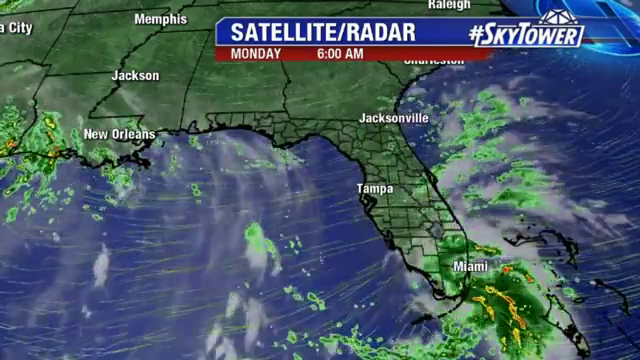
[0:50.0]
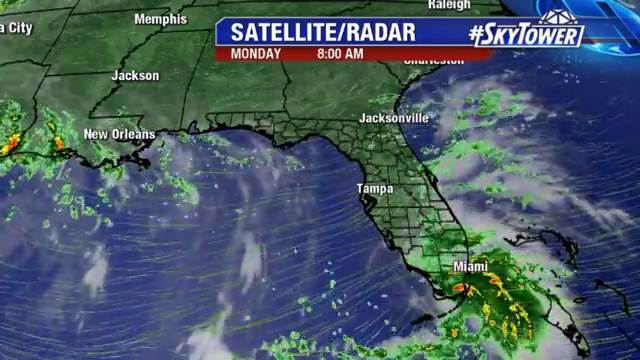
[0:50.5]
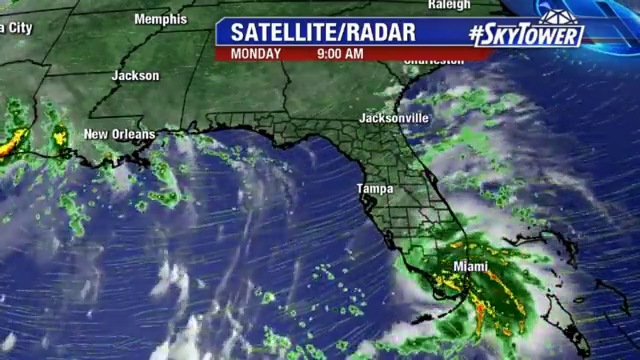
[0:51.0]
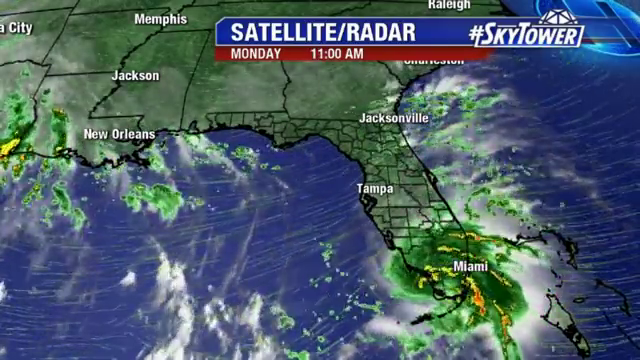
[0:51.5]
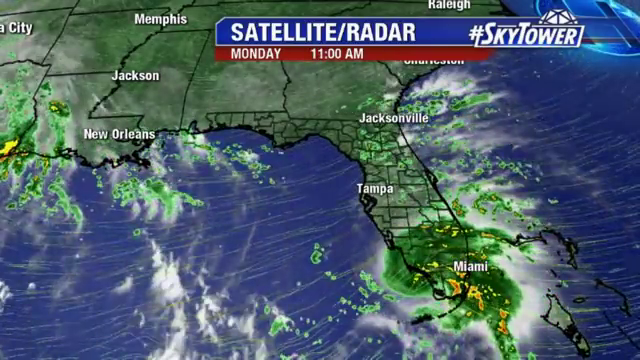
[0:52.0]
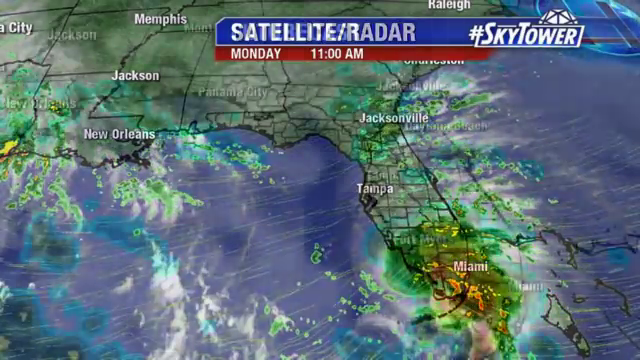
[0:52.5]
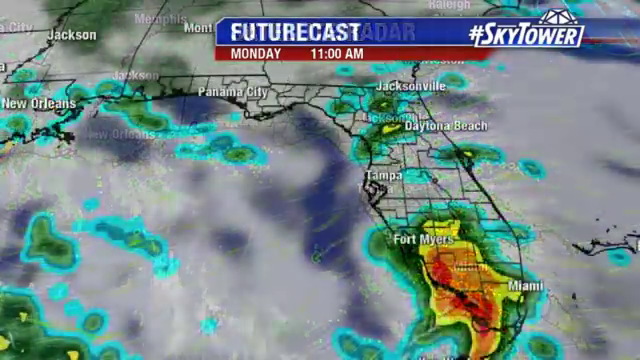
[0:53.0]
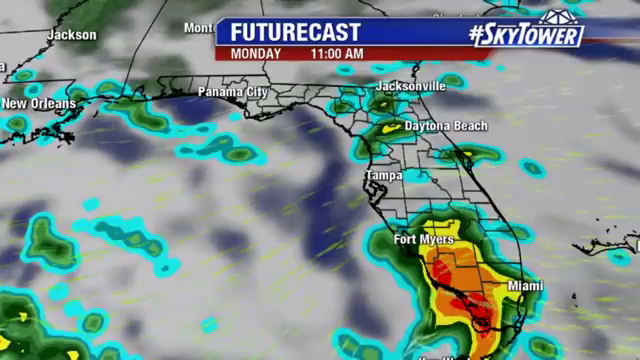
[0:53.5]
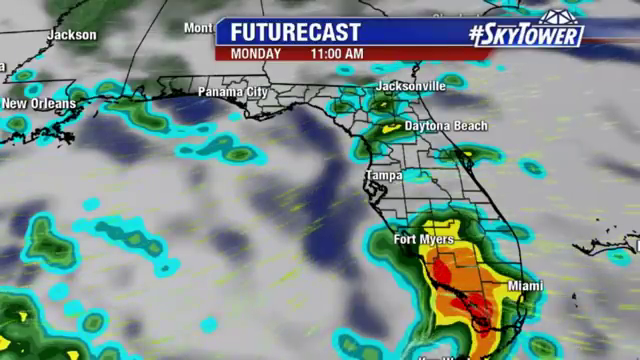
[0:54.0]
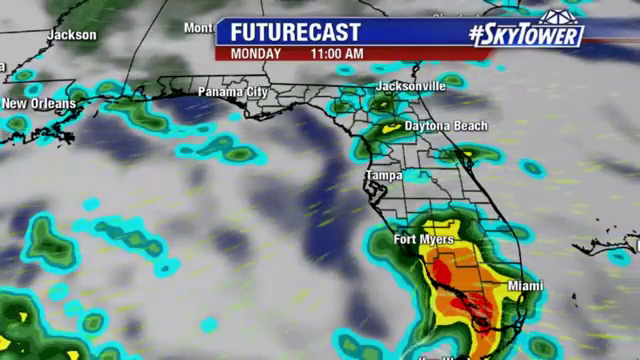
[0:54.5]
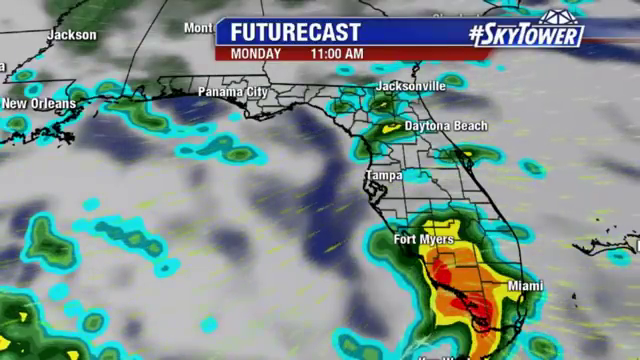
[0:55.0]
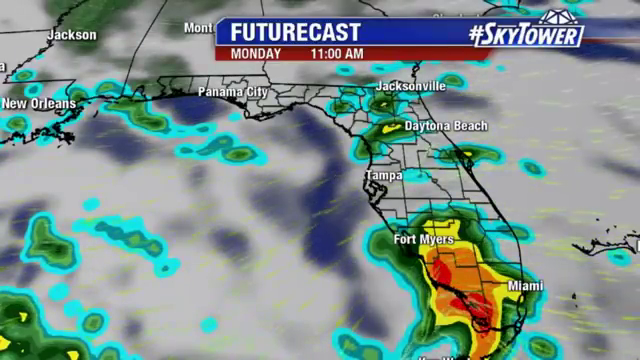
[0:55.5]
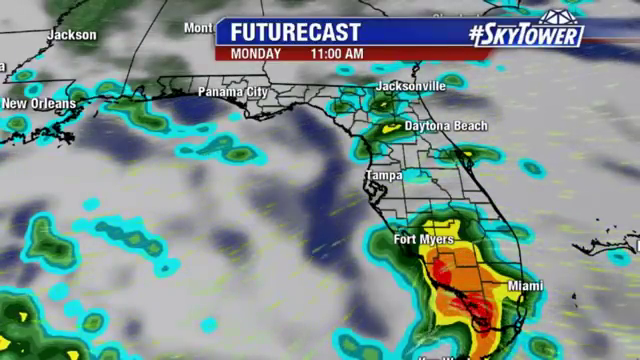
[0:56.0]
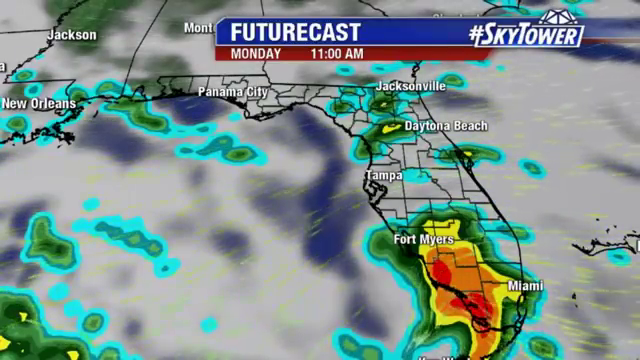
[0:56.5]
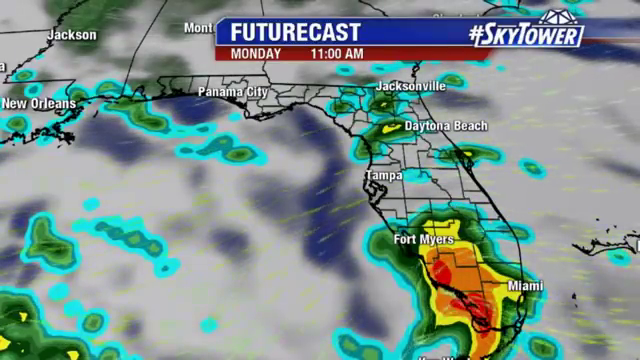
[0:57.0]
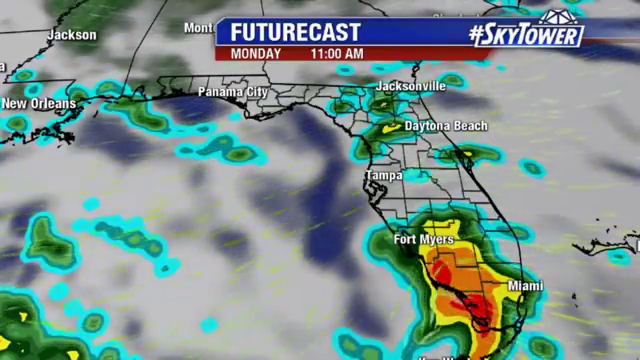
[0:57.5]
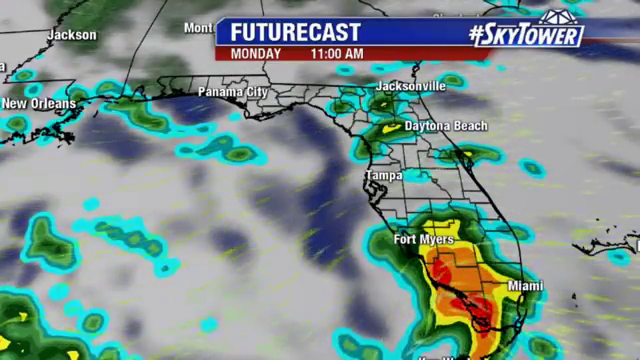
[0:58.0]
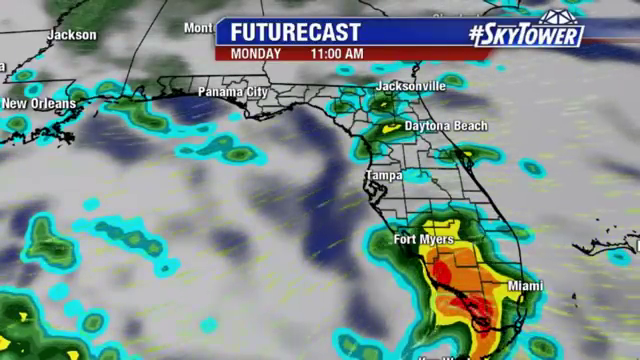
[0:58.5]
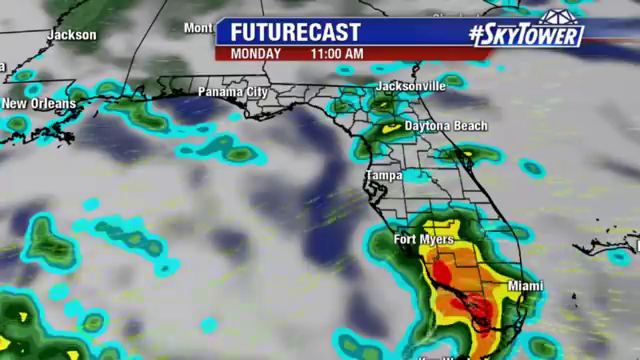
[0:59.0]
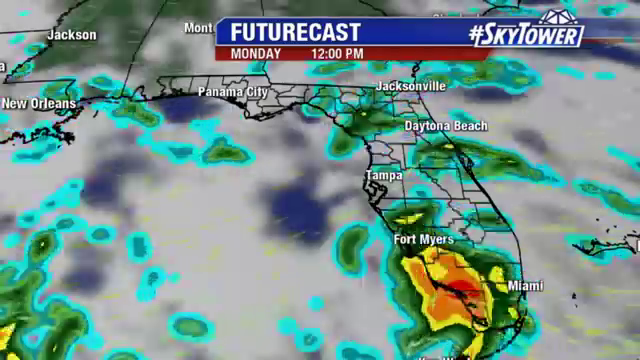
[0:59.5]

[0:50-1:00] A Doppler radar of the weather appears to be focused on Florida, with a lot of green at the base of the state. The satellite radar image spins in a roughly counterclockwise direction while a time clock on the map advances through different time frames on Monday, and the system changes shape. Many graphics show data such as wind speed and ocean currents. In the upper right is a hashtag with the words "Sky Tower".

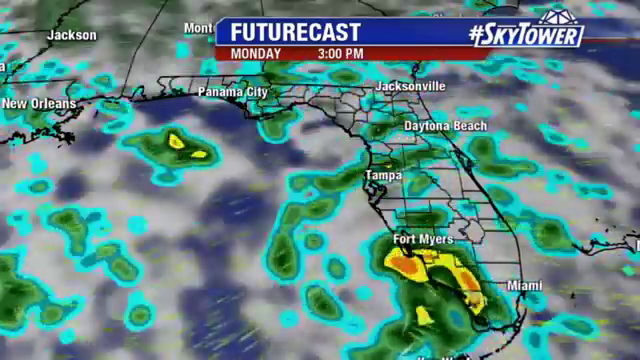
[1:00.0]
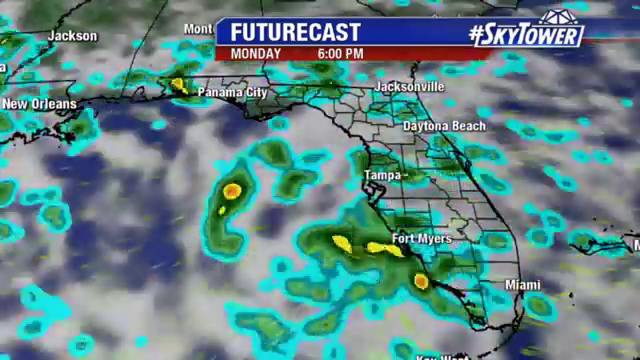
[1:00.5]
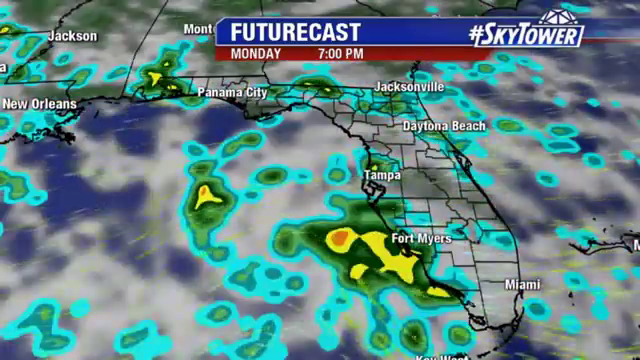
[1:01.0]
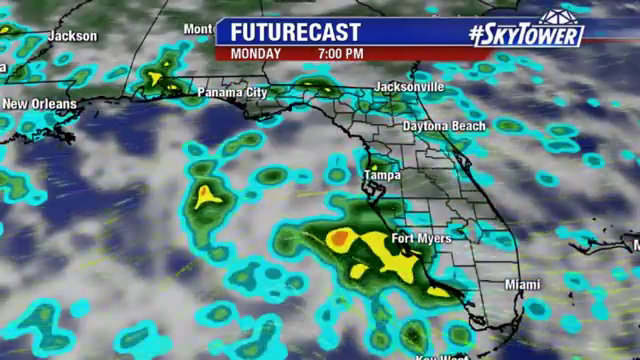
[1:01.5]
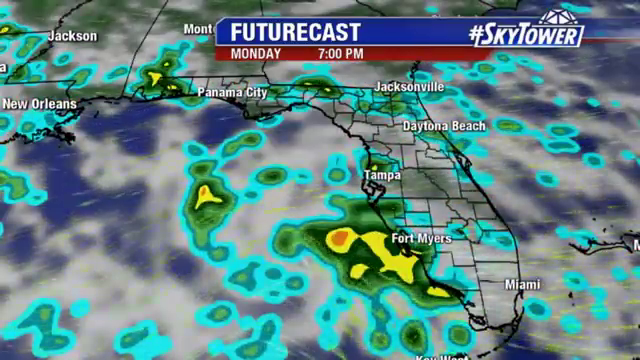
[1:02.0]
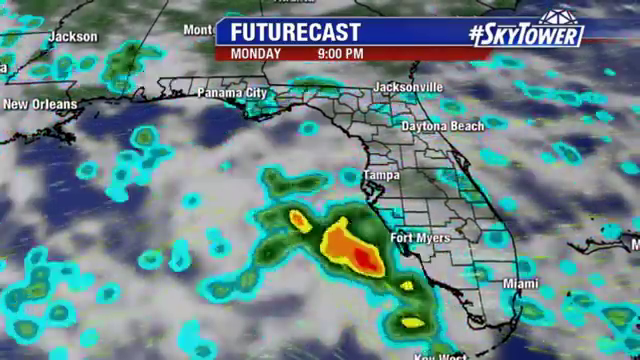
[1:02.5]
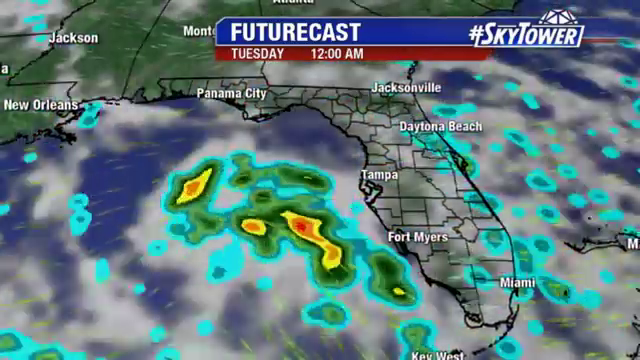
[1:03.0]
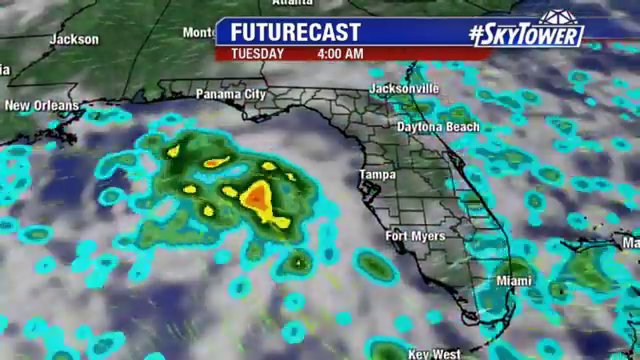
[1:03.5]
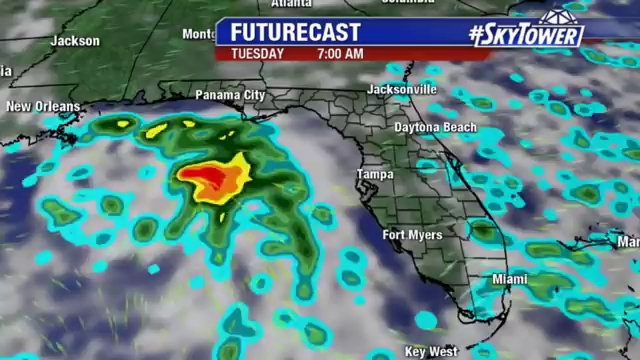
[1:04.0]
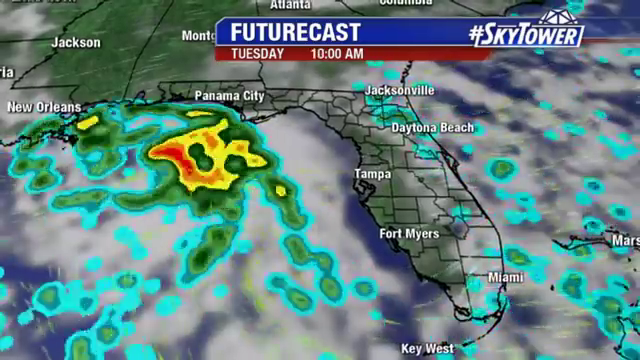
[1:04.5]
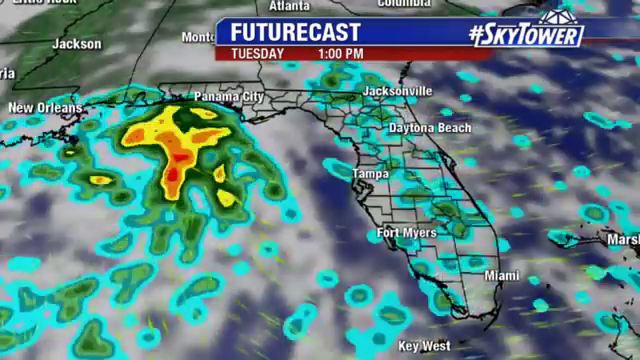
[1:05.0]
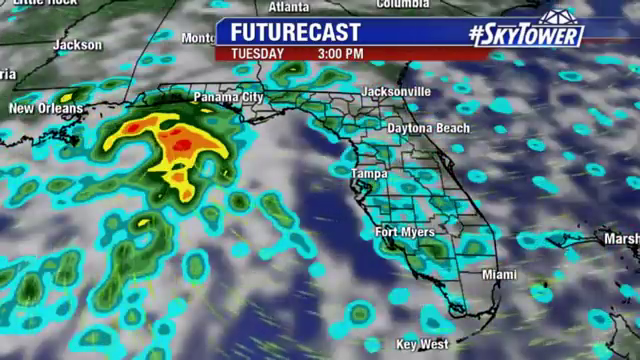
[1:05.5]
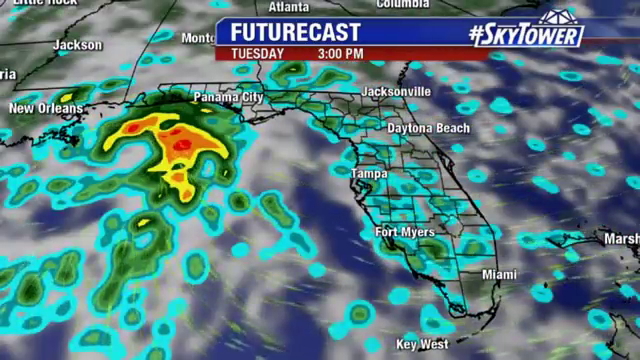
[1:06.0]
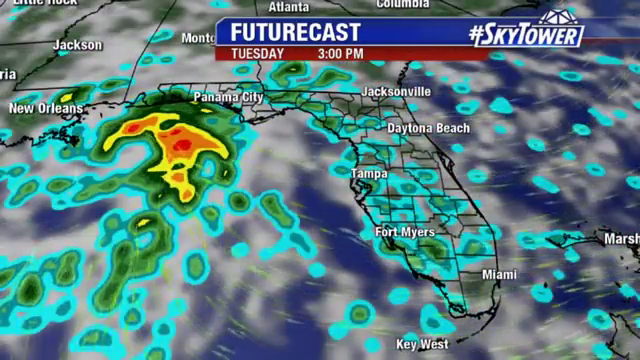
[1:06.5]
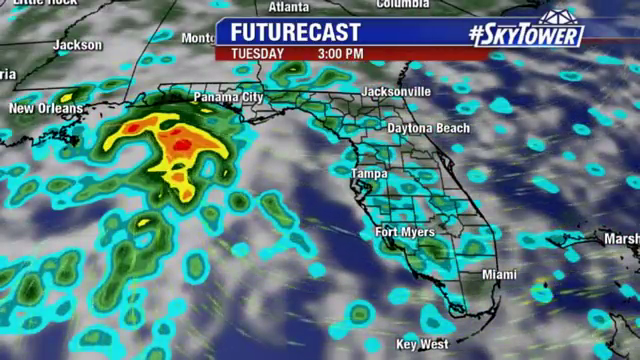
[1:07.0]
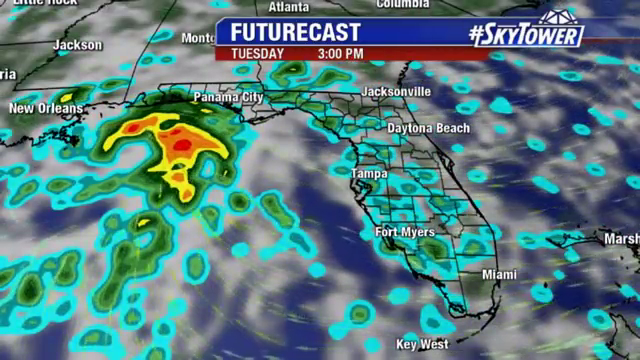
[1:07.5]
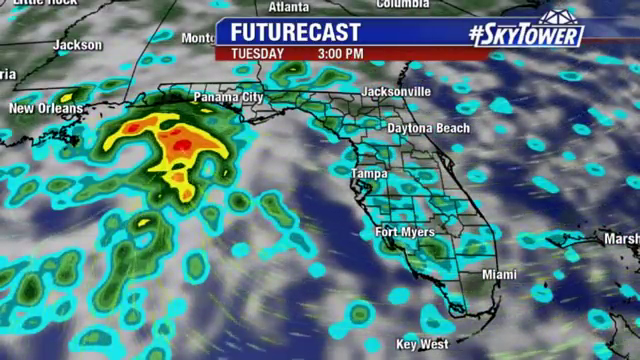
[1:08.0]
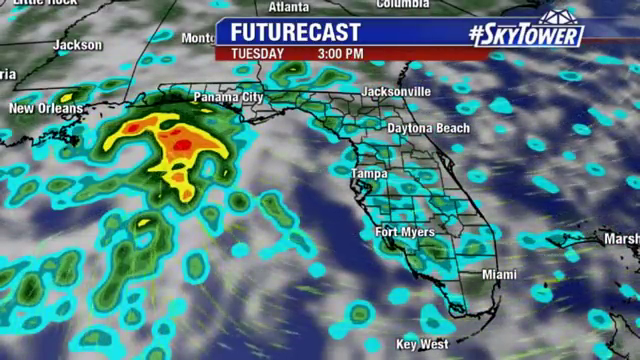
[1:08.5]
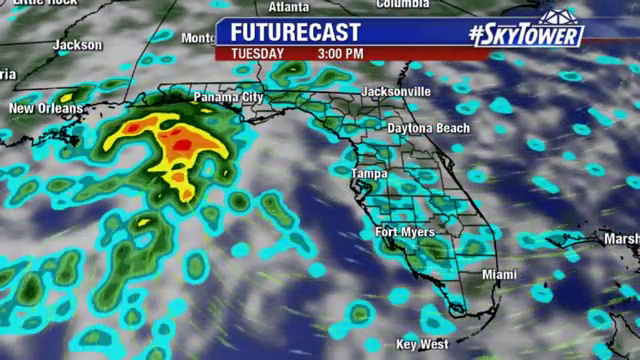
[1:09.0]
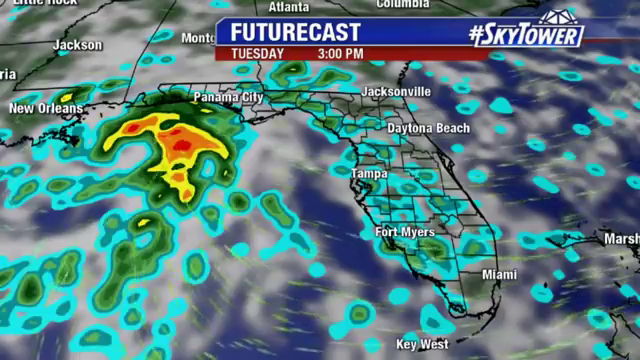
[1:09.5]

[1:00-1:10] A future cast weather map shows the weather projected to happen in the future, starting earlier in the day on Monday and advancing through the rest of Monday. A storm system, illustrated in light green, dark green and yellow, passes over South Florida. It moves counterclockwise, apparently indicating some kind of tropical system, going over South Florida into the Gulf, then twisting and turning counterclockwise and heading up through Mississippi. Elsewhere on the map are somewhat turquoise blobs with light blue and dark blue, and white lines running from east to west.